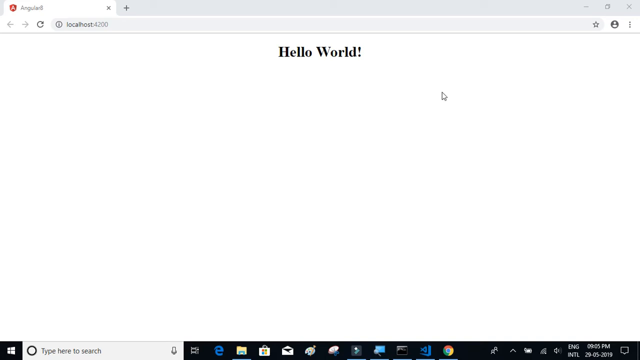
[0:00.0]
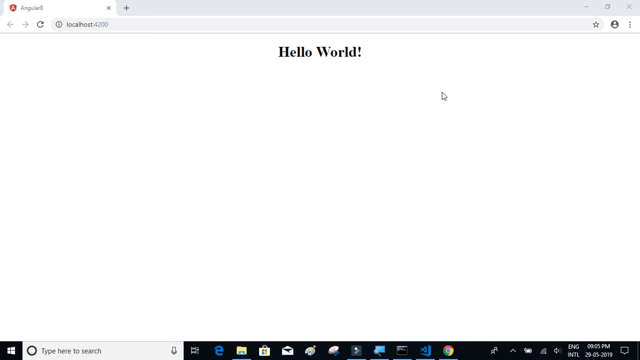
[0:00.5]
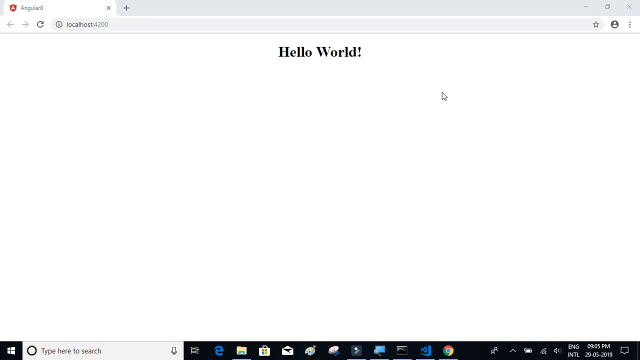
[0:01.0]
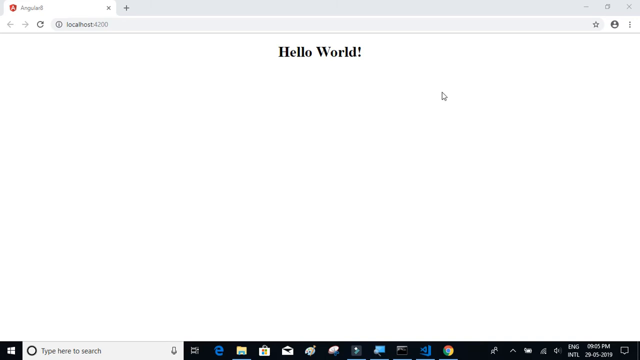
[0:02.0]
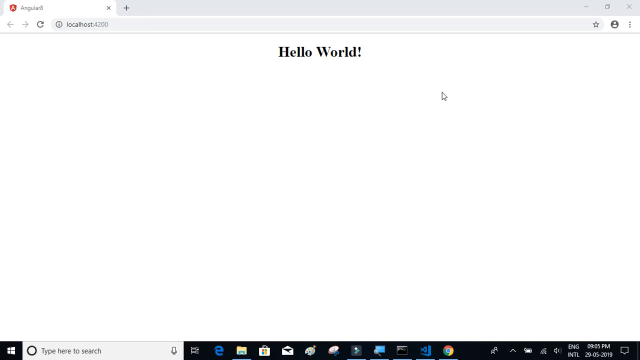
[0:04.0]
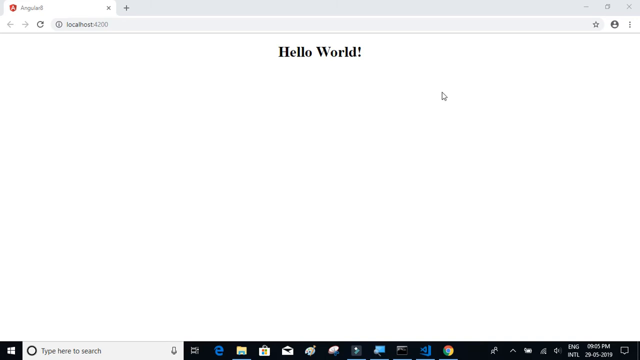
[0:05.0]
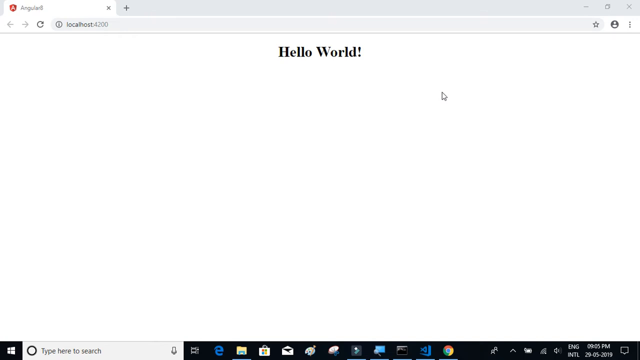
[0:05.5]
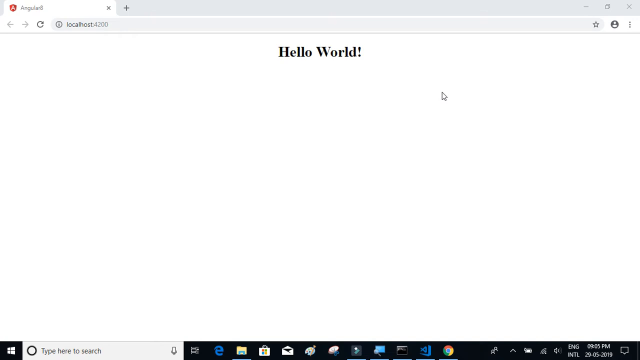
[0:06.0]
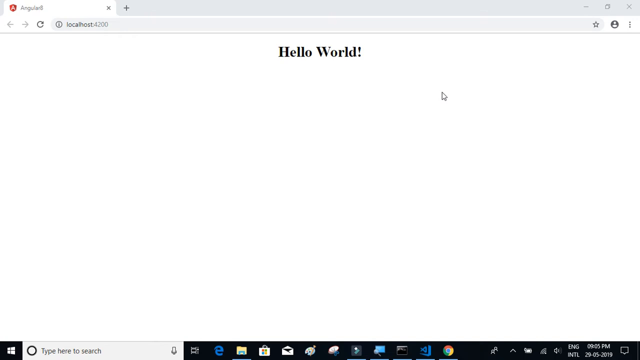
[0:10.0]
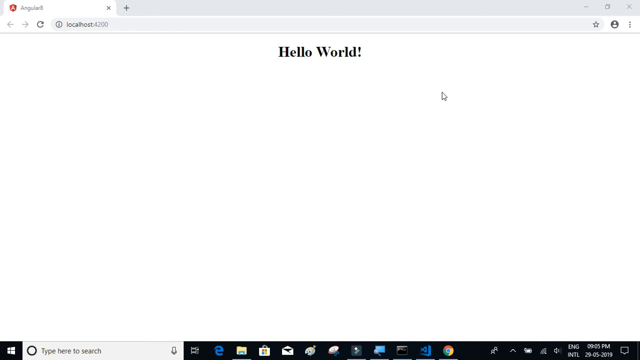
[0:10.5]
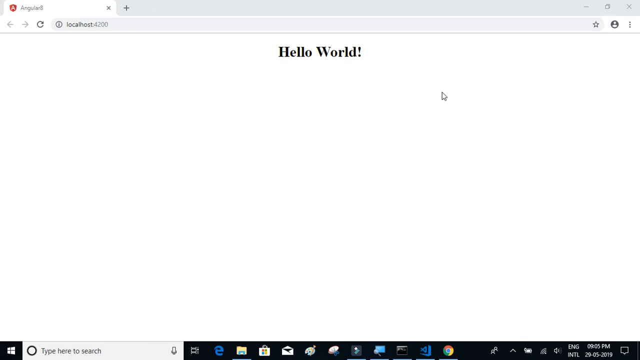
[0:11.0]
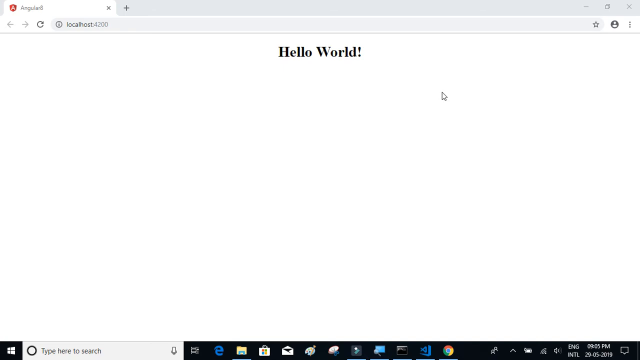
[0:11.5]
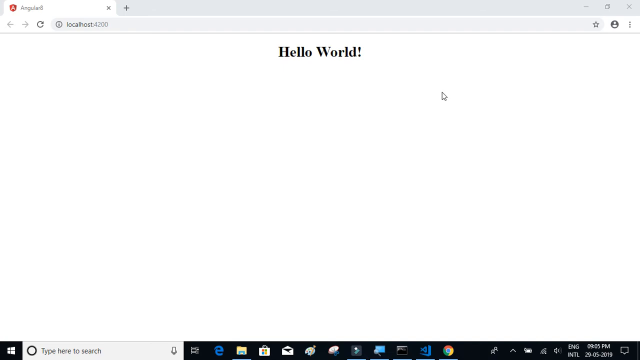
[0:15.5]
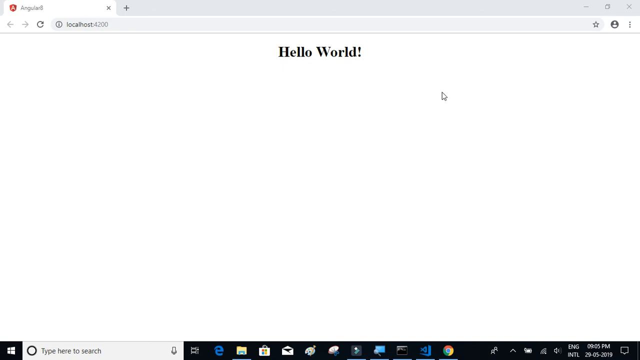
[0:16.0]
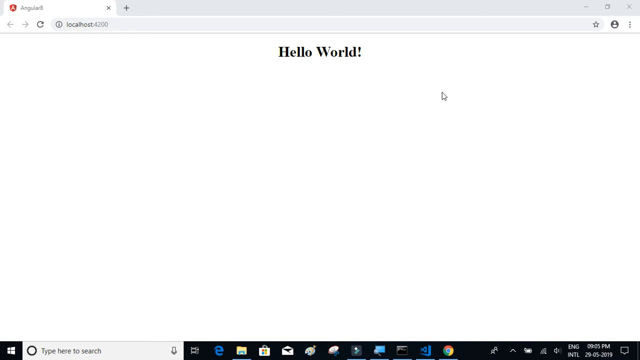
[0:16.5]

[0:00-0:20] A browser tab is open on a computer, and the page reads "Hello World!" in black print, with a capital H and a capital W, the other letters lowercase, and a single exclamation point on the right. Only one tab is open, and it says "local host 4200". On the left are back, forward and refresh buttons. On the right are a star button, a profile button and a more-options button made of three dots.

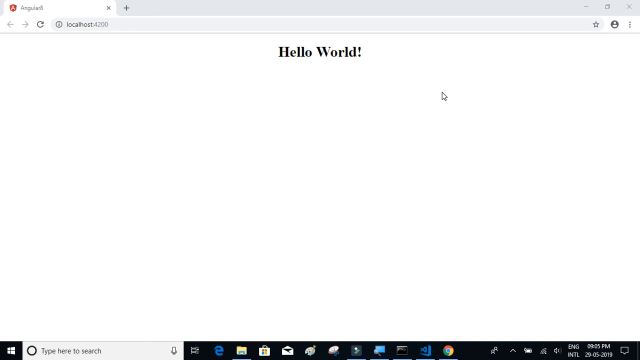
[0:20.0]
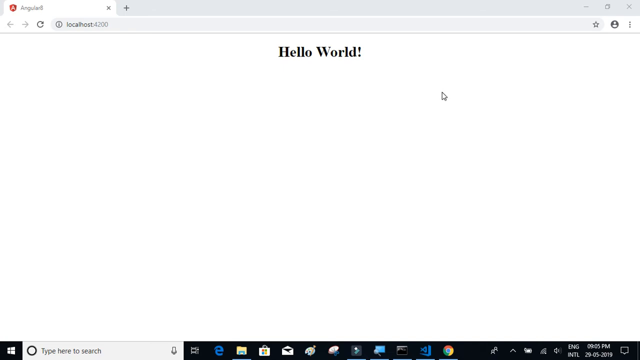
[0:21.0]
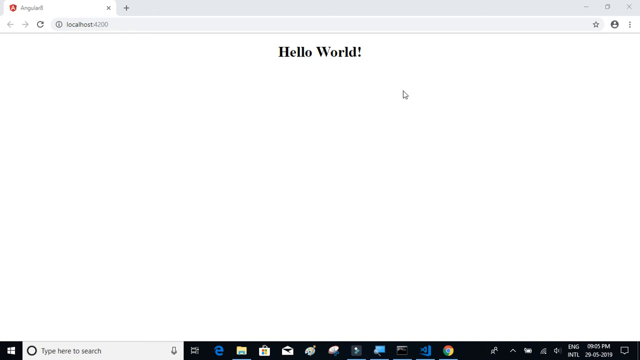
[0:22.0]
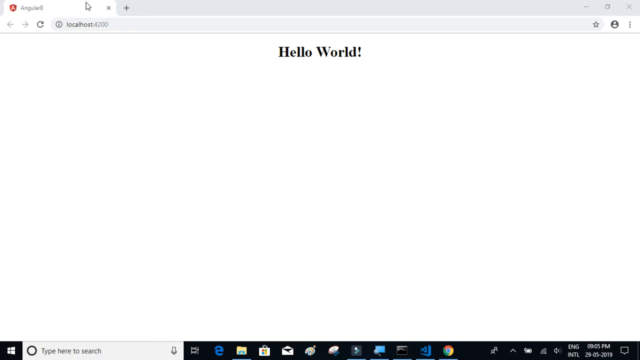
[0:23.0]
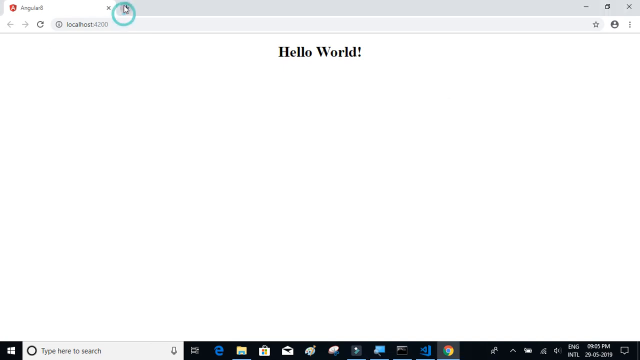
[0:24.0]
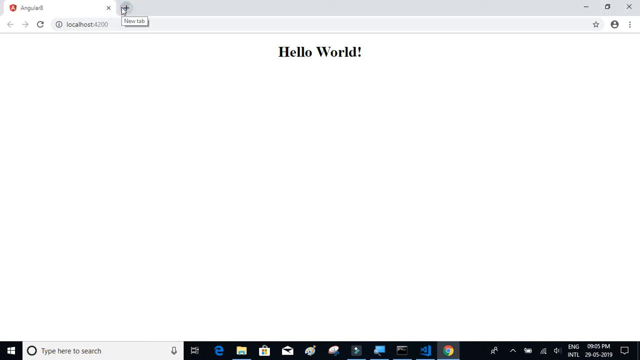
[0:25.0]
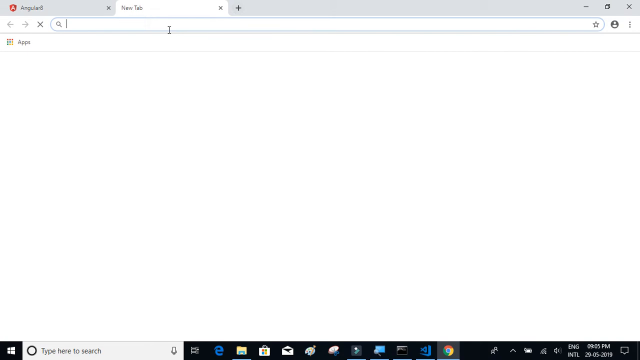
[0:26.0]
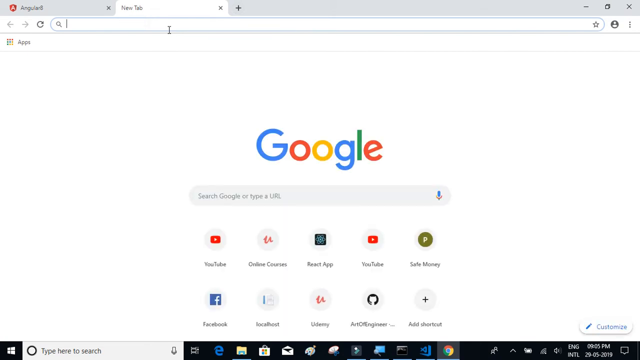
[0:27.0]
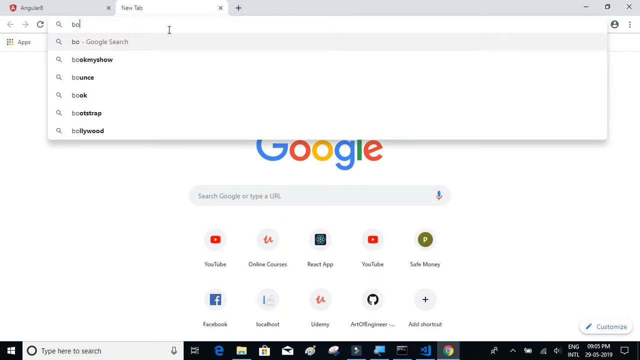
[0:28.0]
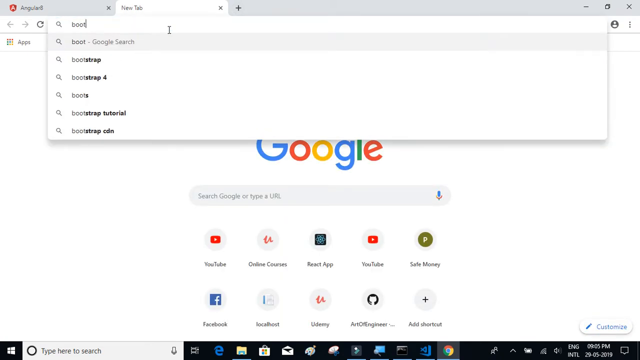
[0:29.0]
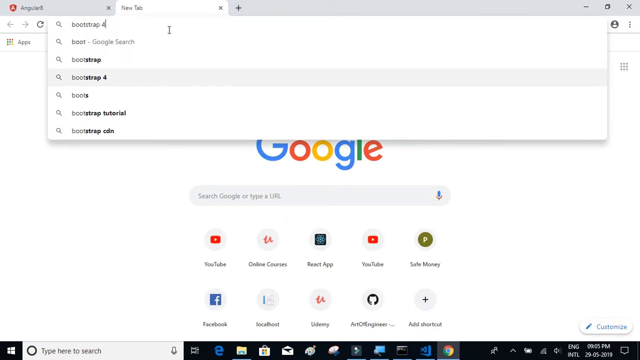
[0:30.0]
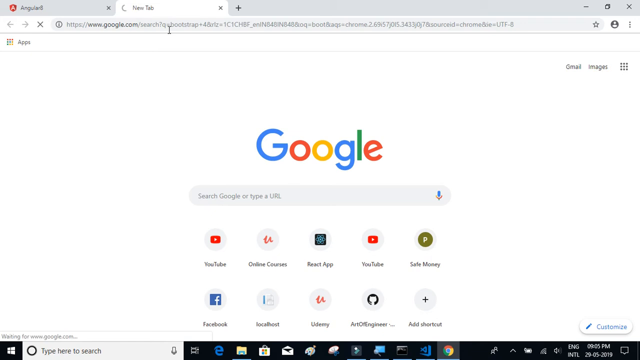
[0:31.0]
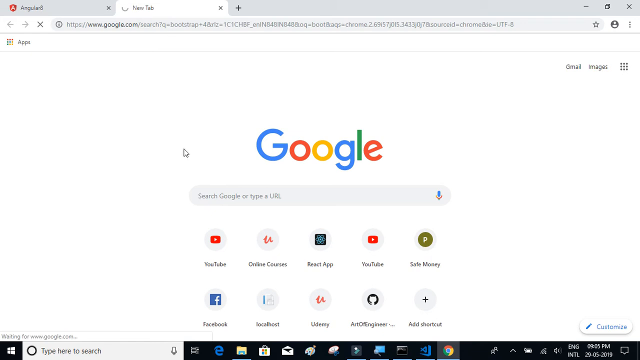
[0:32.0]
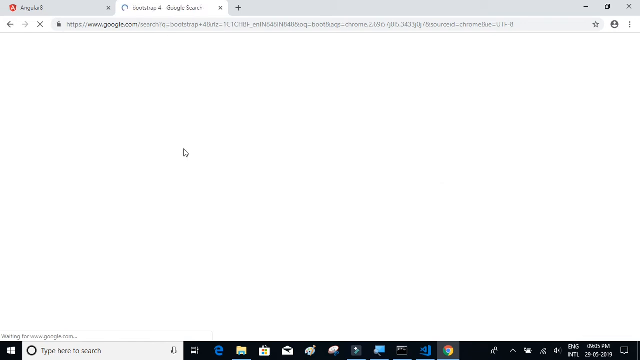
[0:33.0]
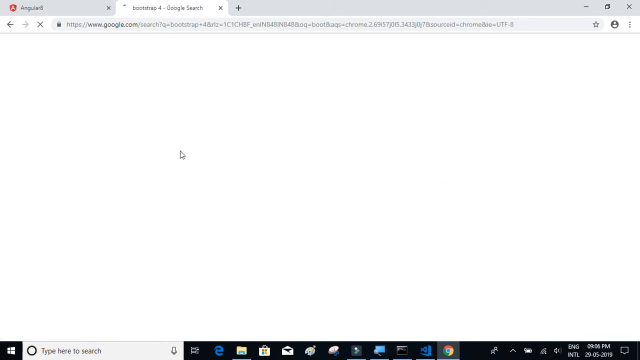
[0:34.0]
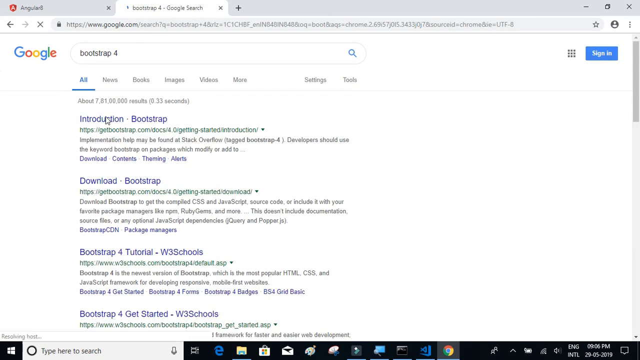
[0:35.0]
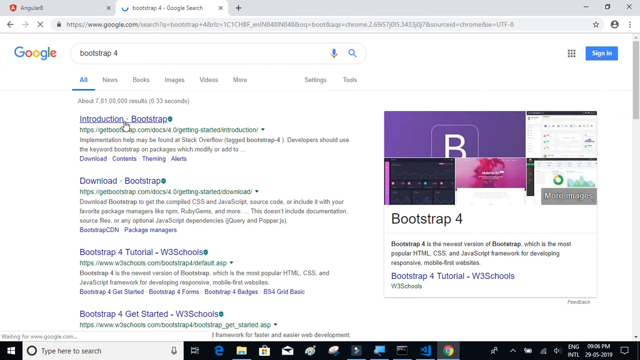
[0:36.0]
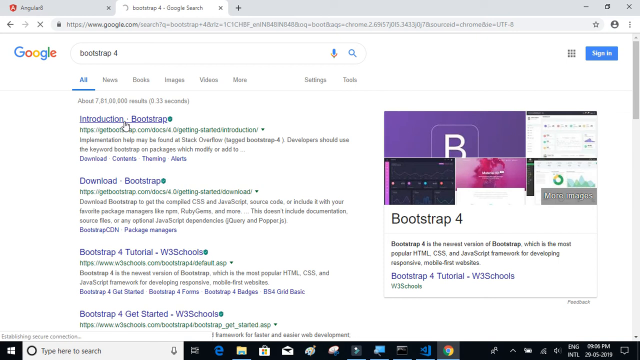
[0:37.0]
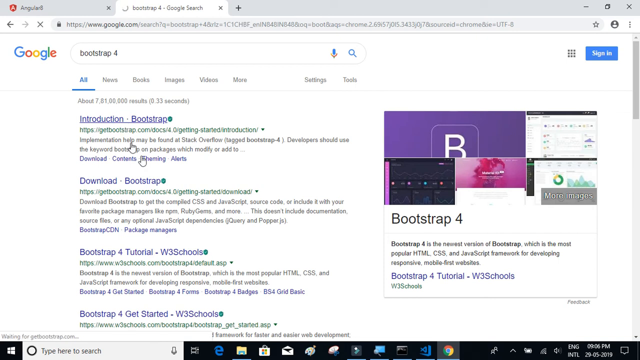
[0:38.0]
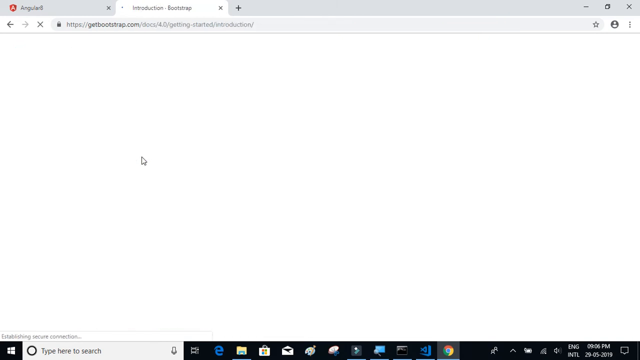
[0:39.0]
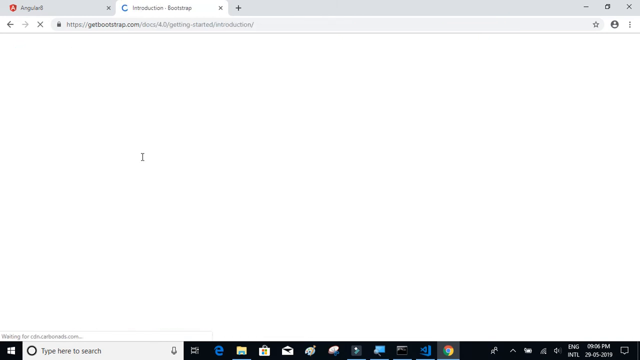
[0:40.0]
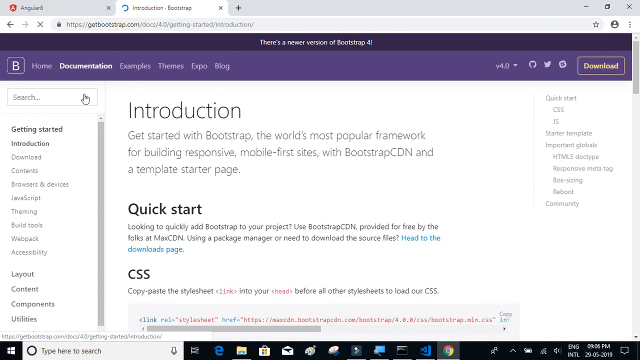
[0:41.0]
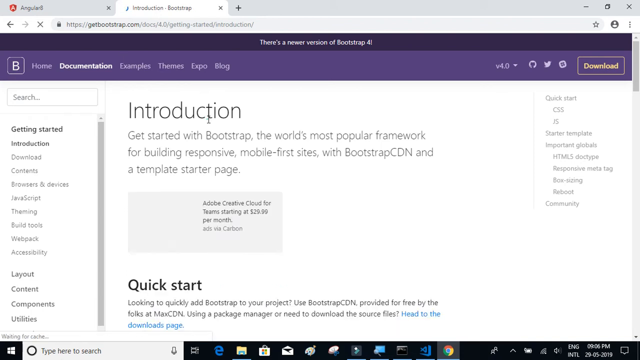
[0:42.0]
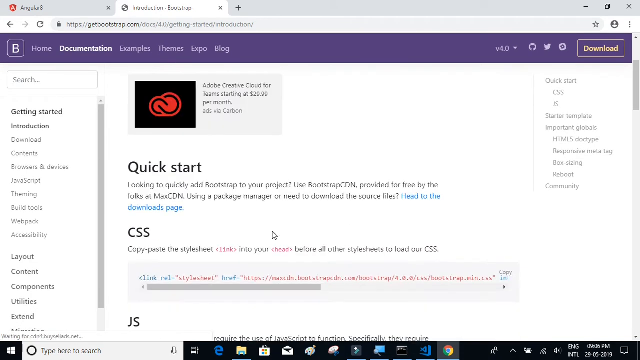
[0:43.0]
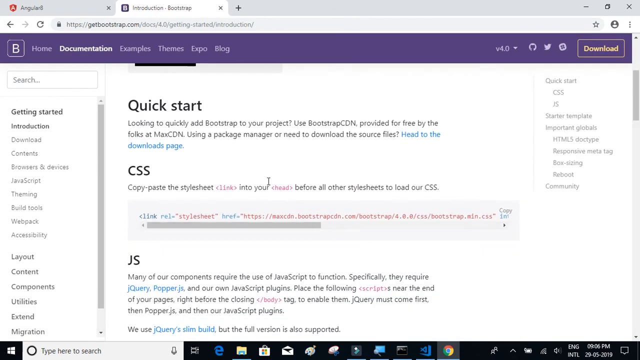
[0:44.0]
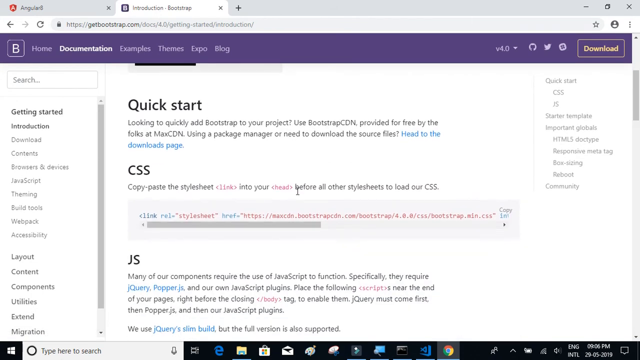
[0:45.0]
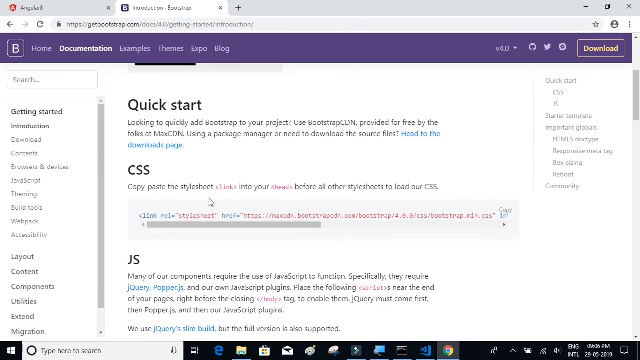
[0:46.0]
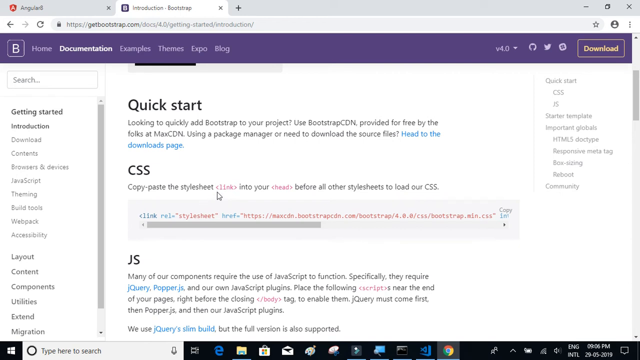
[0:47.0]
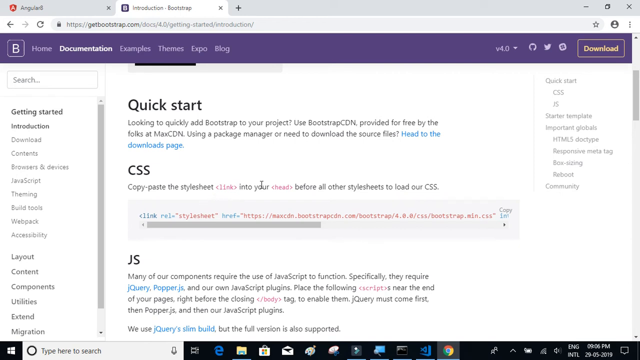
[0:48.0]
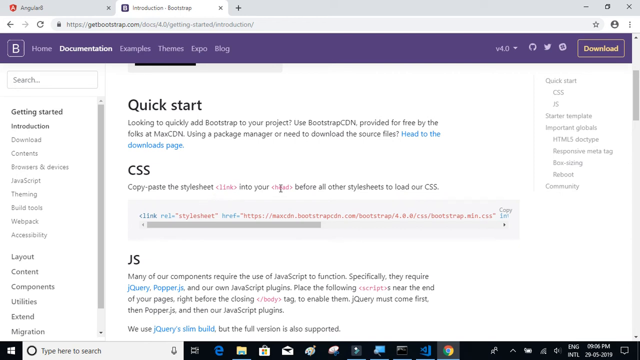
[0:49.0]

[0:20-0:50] A browser tab on a computer shows "hello world" in black print at the top. The user clicks a plus to open a new tab and types in Bootstrap. Google comes up and the page spins. The search area reads "bootstrap 4", and different versions appear in the results. The user is about to click a result that says "introduction - bootstrap". An introduction page then opens that says "get started with bootstrap the world's most popular framework for building responsive mobile first sites with bootstrap CDN and a template". It has a quick start area, with a CSS area and a JS area. The user focuses on different areas of the paragraphs on the screen and highlights a few of the words.